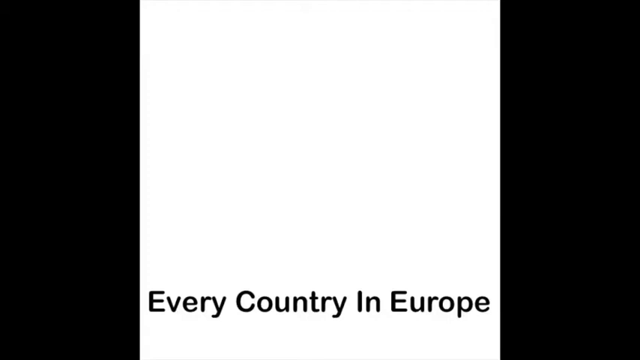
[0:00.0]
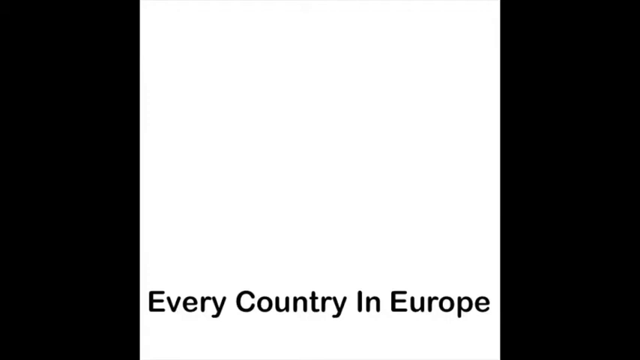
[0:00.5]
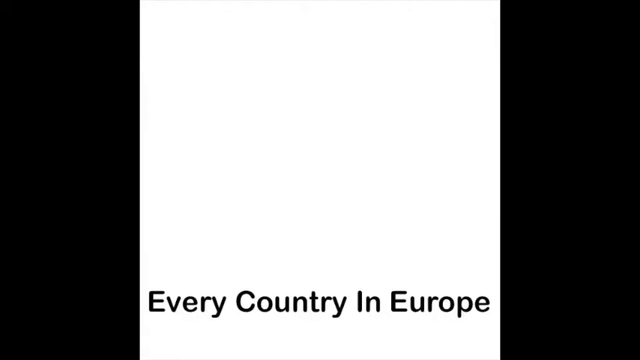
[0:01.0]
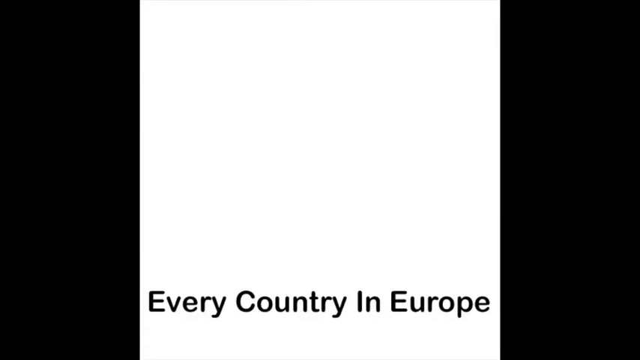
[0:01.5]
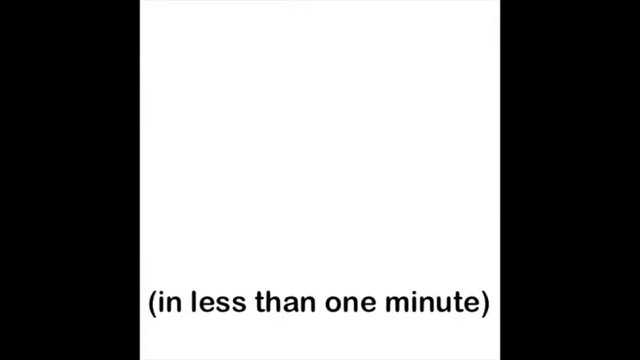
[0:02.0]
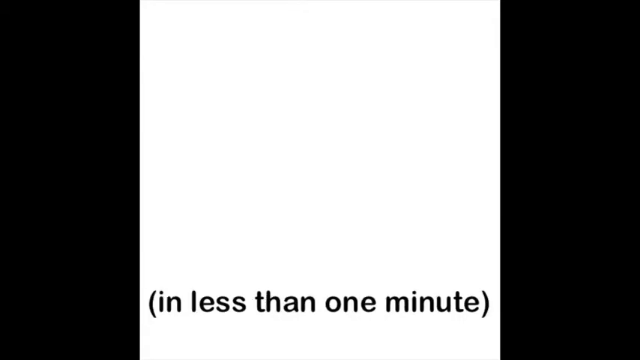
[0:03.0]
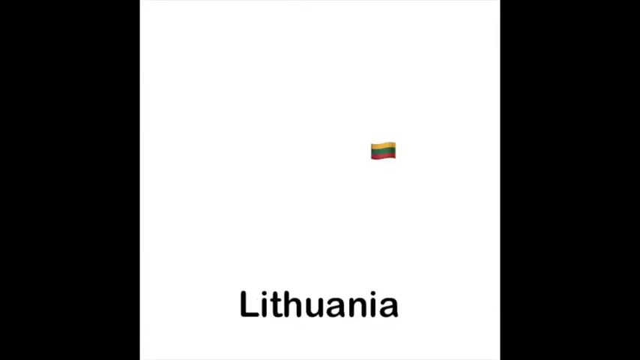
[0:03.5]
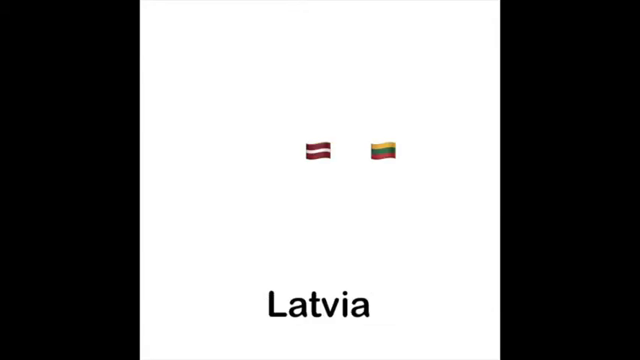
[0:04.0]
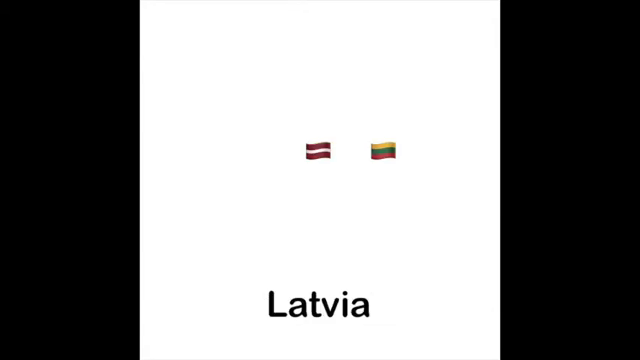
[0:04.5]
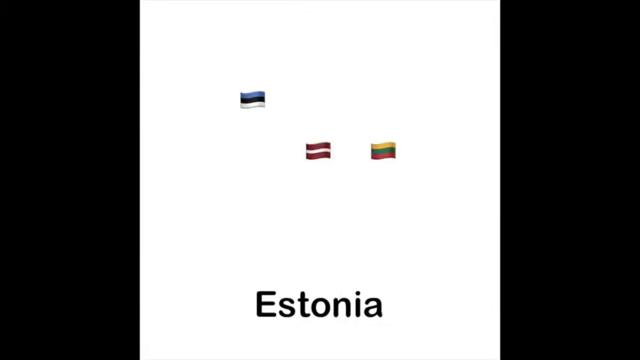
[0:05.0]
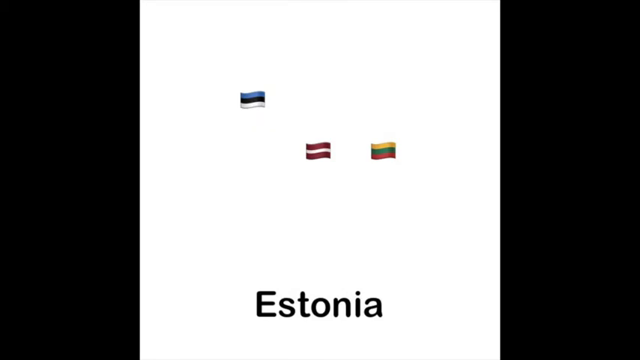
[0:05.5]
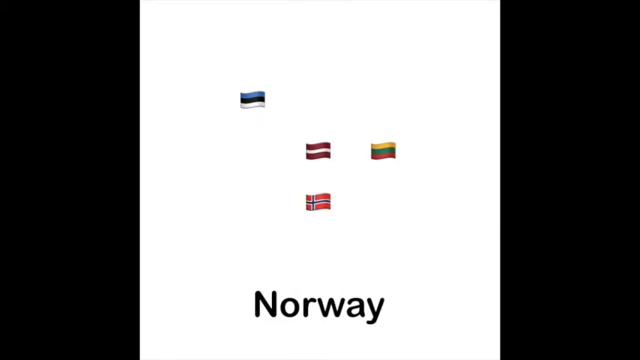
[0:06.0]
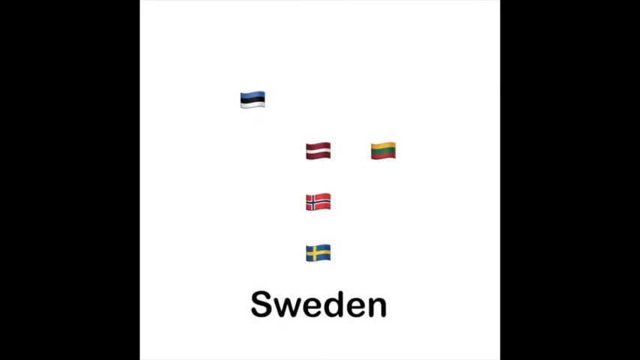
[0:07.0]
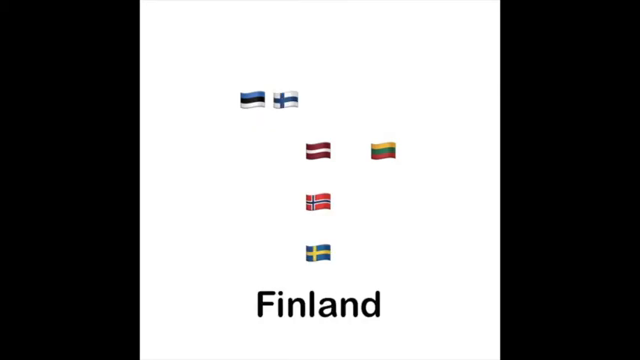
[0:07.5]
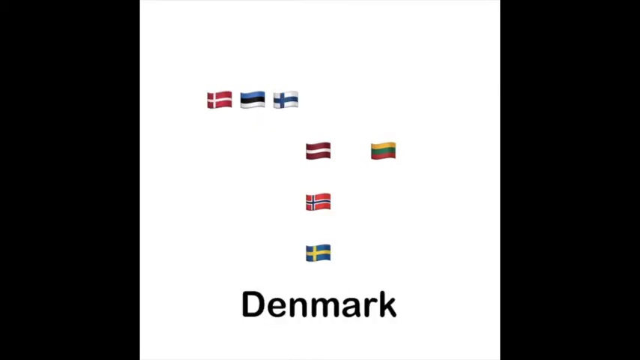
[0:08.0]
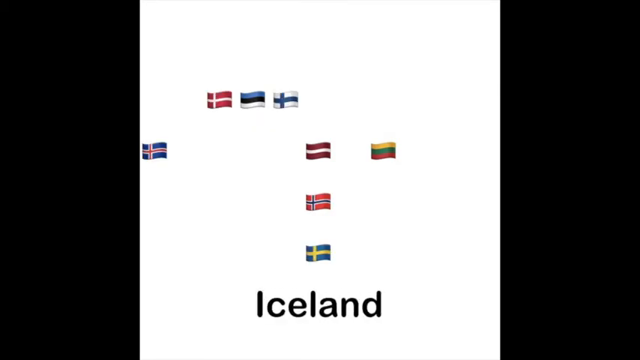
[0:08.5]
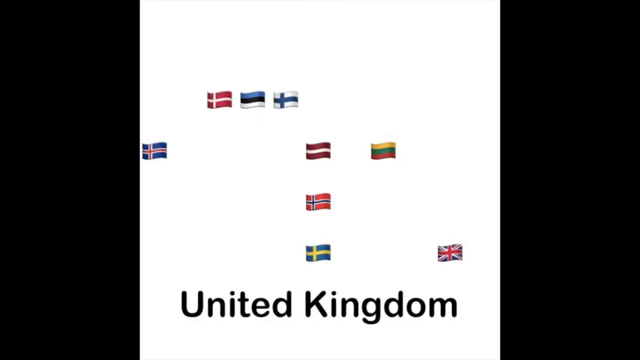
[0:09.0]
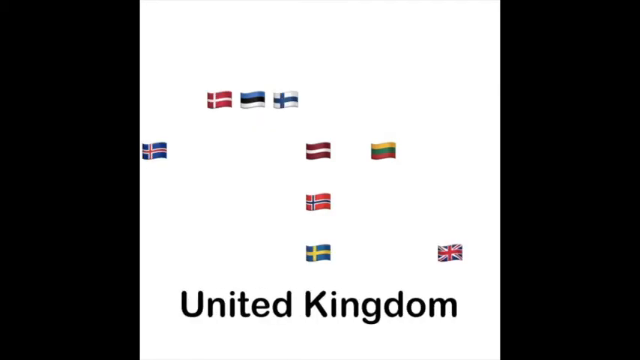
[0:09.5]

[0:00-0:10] The text "every country in Europe" appears at the bottom of the screen. The screen then switches, and the bottom reads "in less than one minute." Next, a national flag appears in the middle with "Lithuania" at the bottom. Another flag follows, labeled "Latvia" at the bottom, then another labeled "Estonia," then "Norway." More flags are added one after another: Sweden, Finland, Denmark, Iceland, and United Kingdom. The flags appear randomly all over the screen.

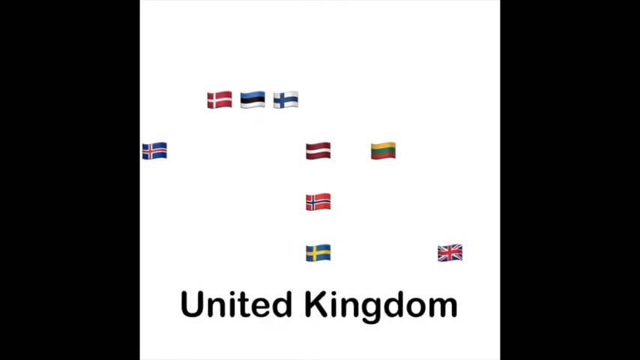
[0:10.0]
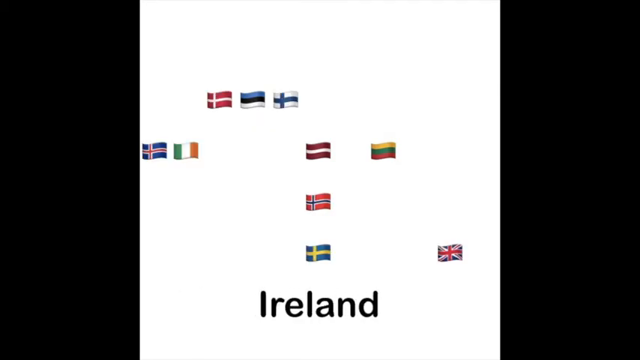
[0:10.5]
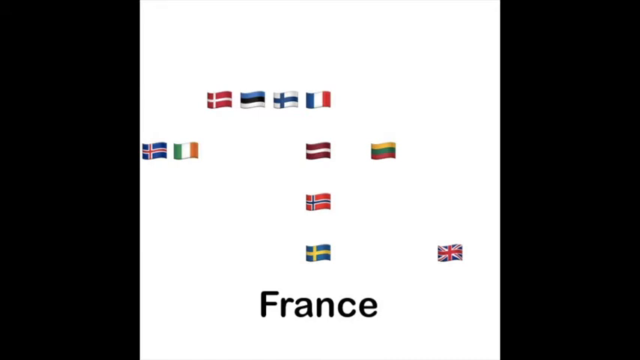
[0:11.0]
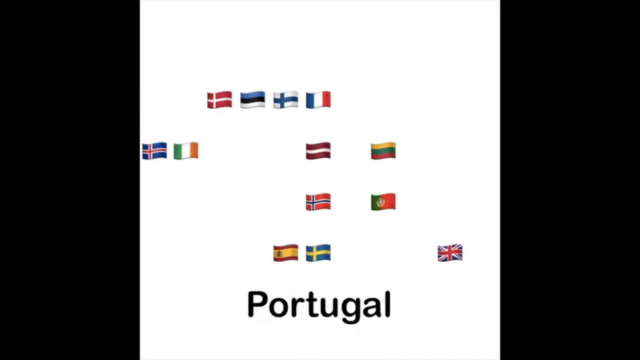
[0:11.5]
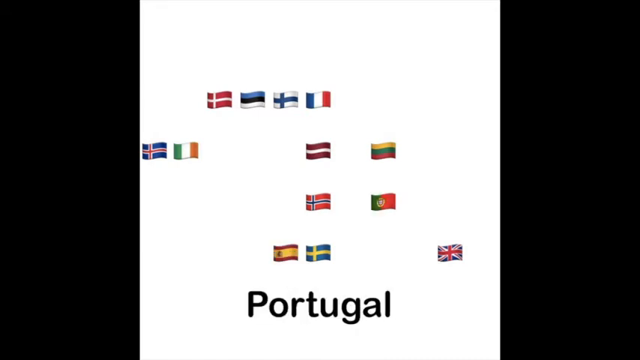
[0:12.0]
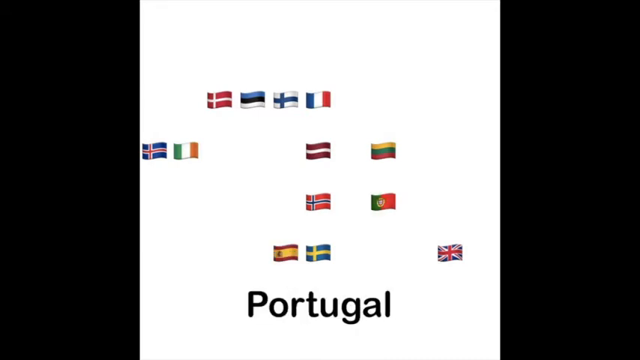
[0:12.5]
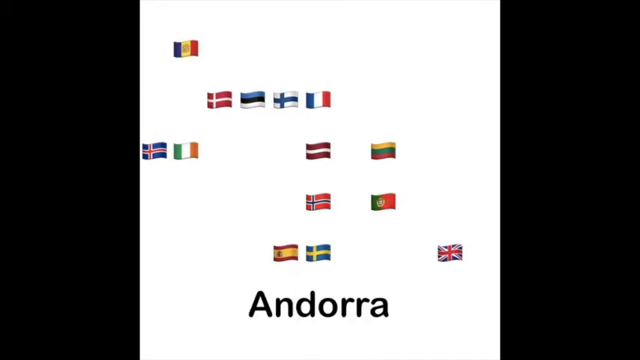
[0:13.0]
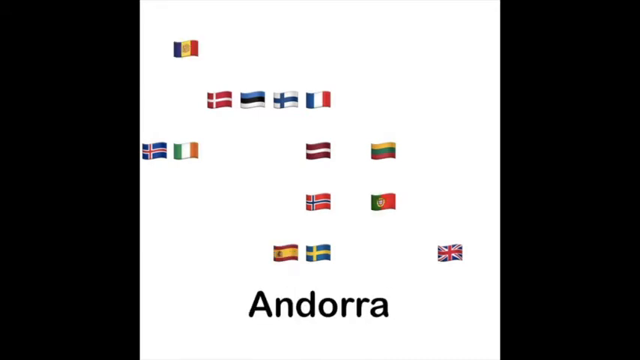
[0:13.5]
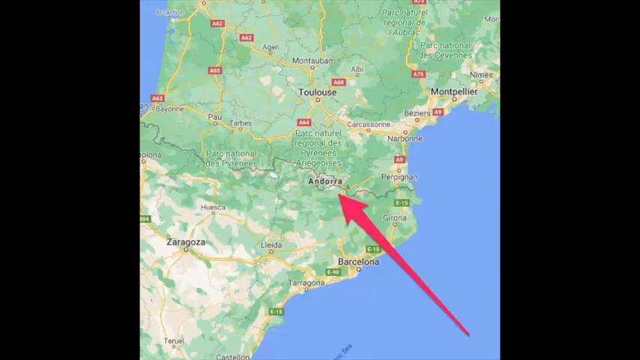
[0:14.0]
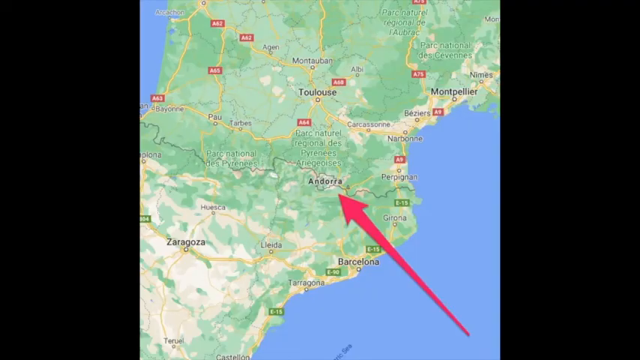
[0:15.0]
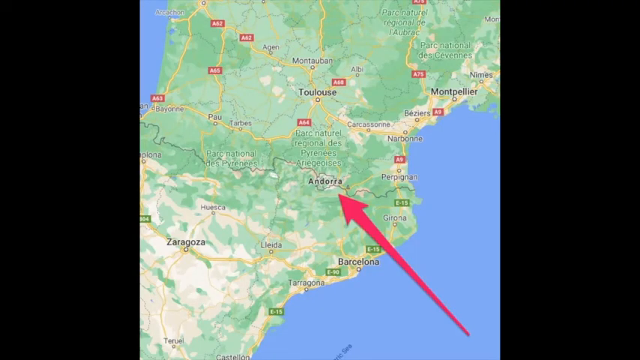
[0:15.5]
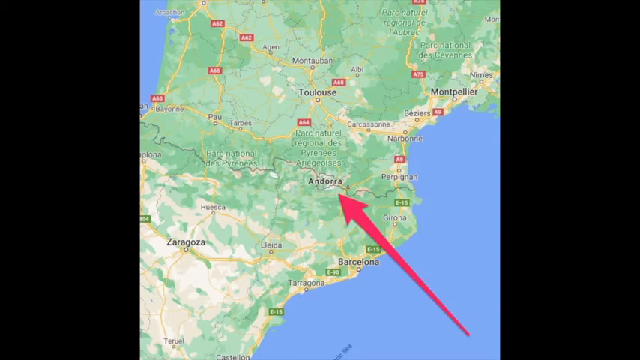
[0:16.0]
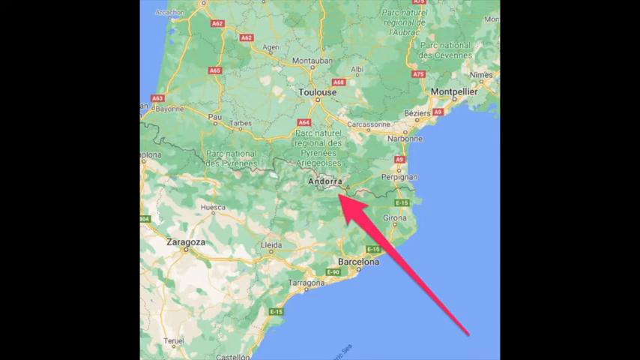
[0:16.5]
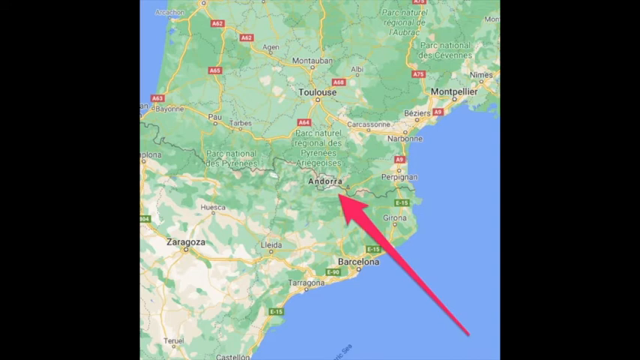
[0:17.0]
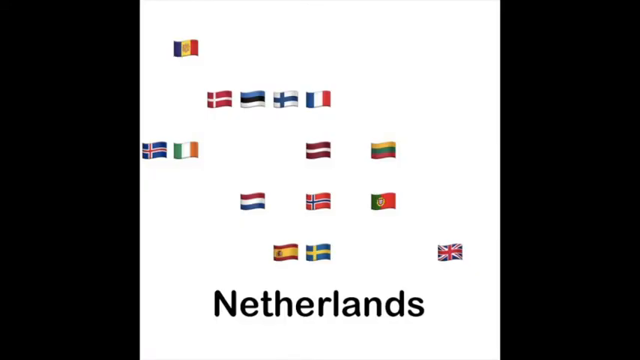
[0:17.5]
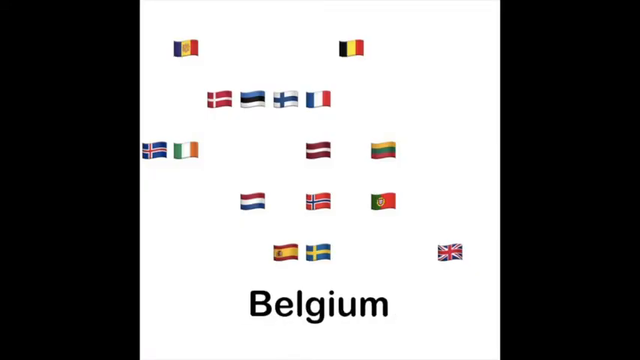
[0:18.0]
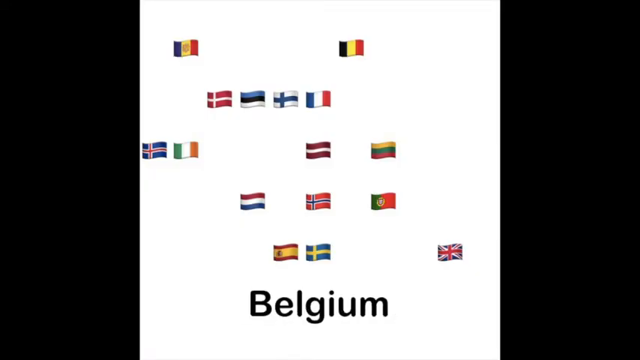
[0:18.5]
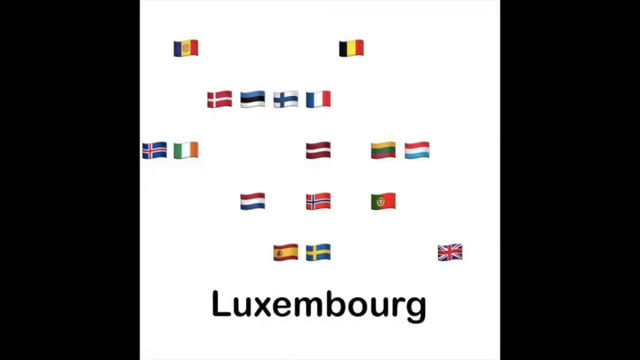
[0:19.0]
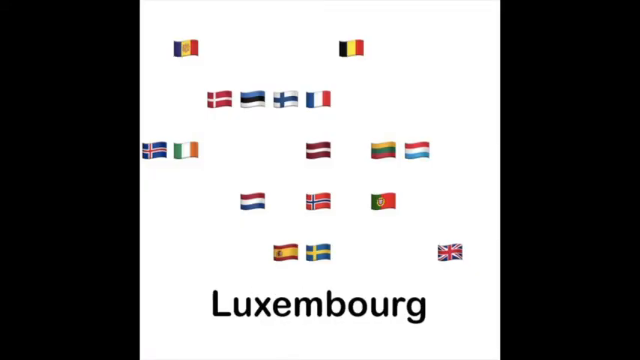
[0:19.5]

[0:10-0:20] Nine national flags are on the screen. Another flag is added, Ireland, followed by France, Spain, Portugal, and Andorra. The screen then switches to a green map with a red arrow pointing to Andorra; blue areas at the top left and bottom right indicate ocean water. The video then switches back to the flag screen, where more flags are added: Netherlands, Belgium, Luxembourg, and finally Germany. The colorful flags are added randomly all over the screen.